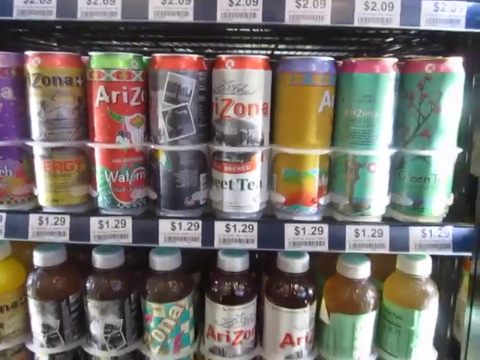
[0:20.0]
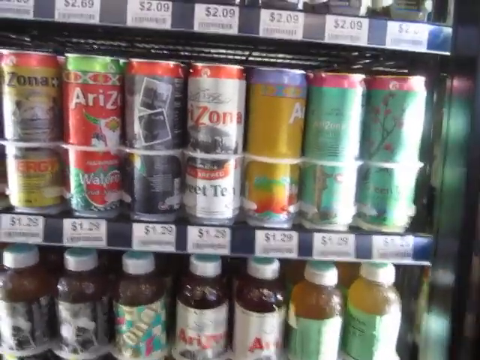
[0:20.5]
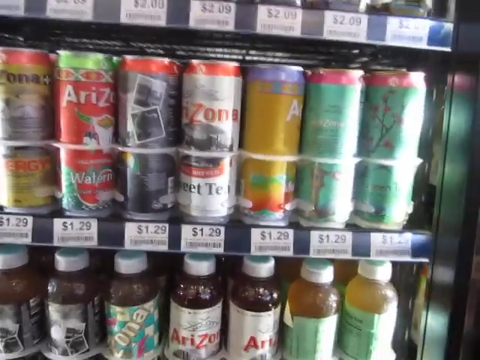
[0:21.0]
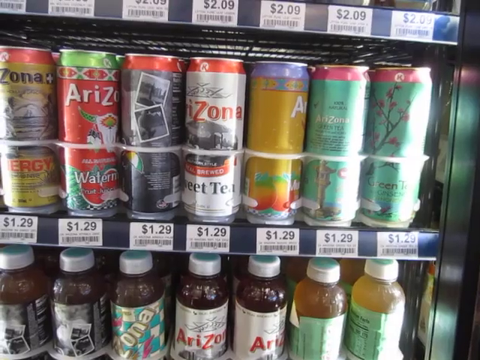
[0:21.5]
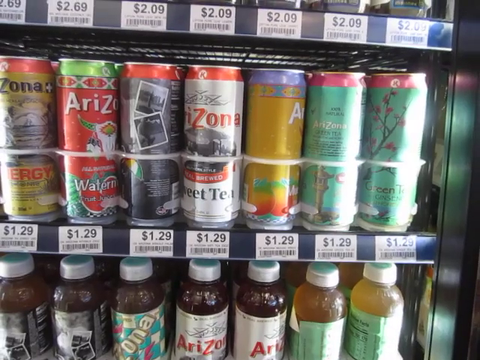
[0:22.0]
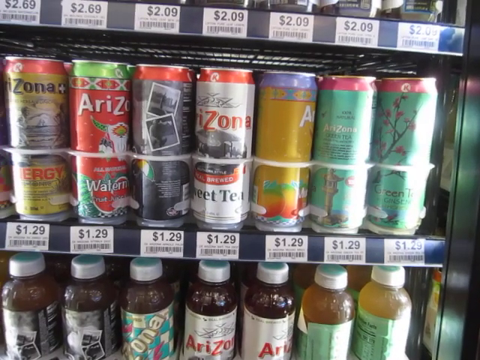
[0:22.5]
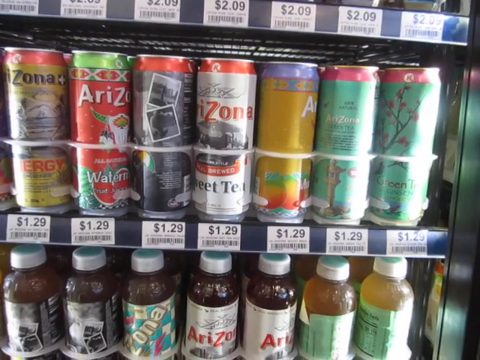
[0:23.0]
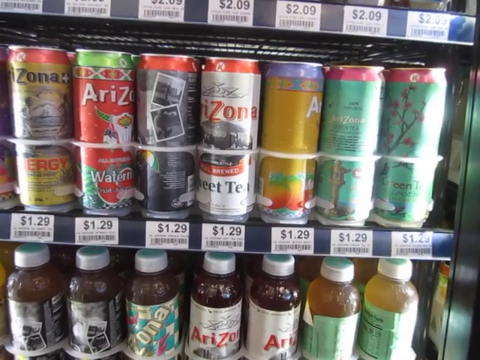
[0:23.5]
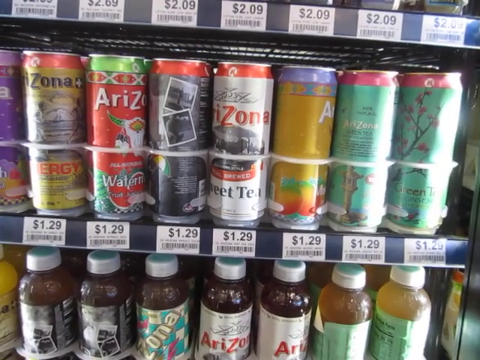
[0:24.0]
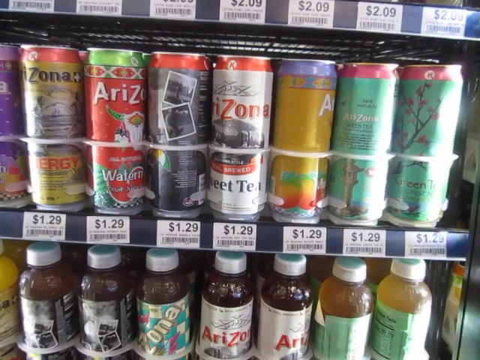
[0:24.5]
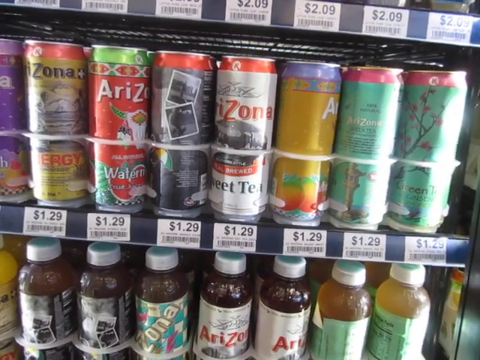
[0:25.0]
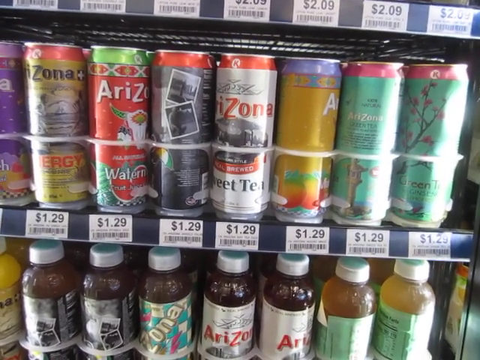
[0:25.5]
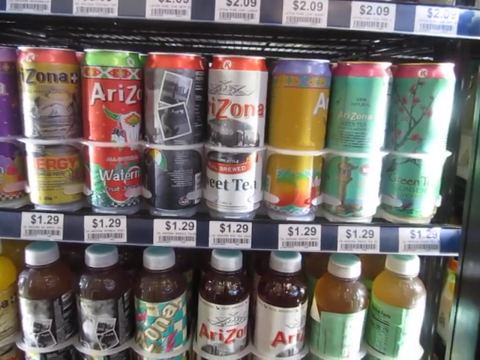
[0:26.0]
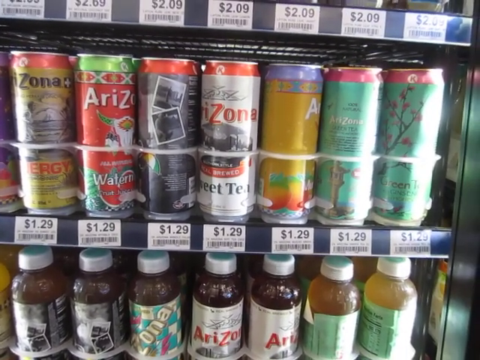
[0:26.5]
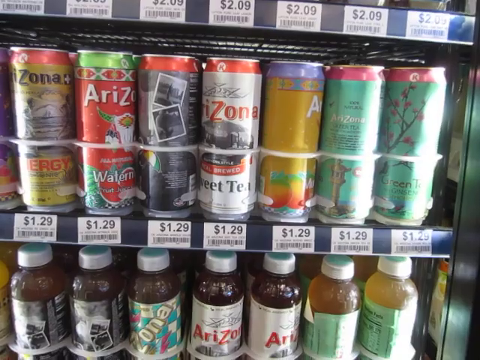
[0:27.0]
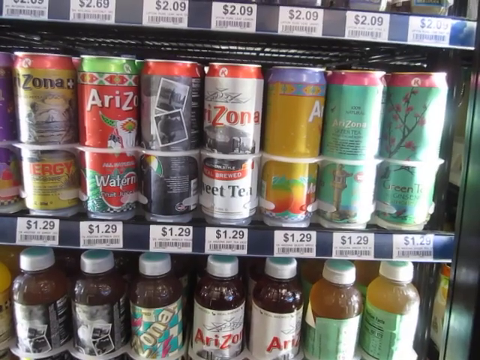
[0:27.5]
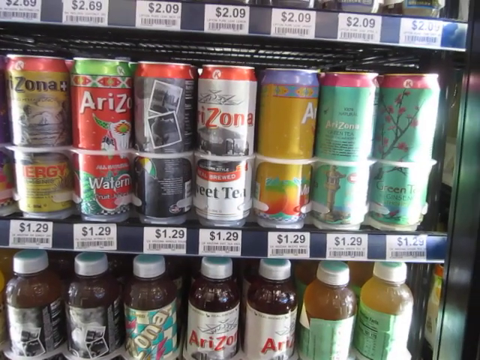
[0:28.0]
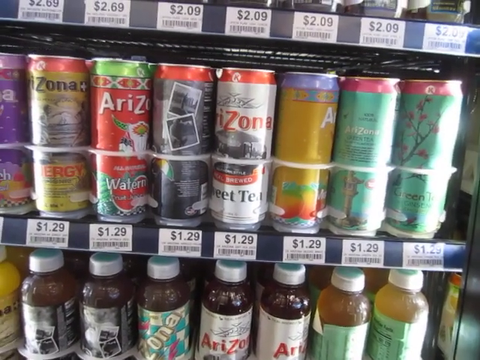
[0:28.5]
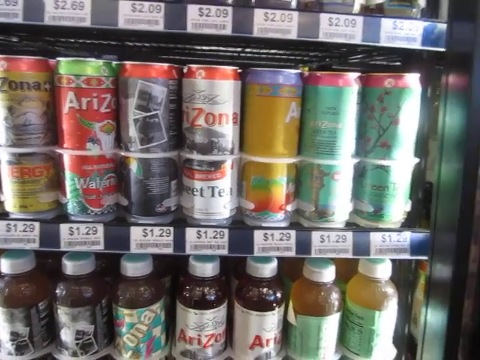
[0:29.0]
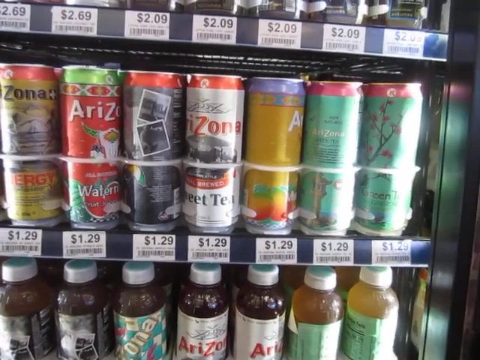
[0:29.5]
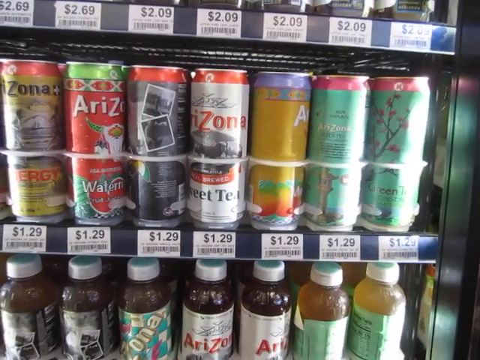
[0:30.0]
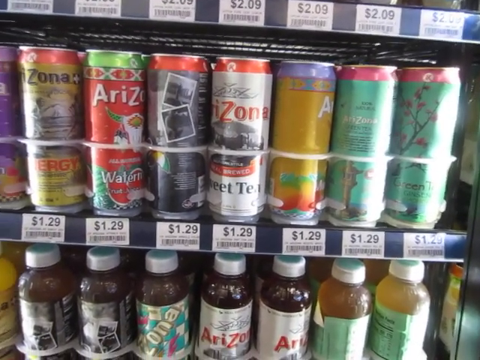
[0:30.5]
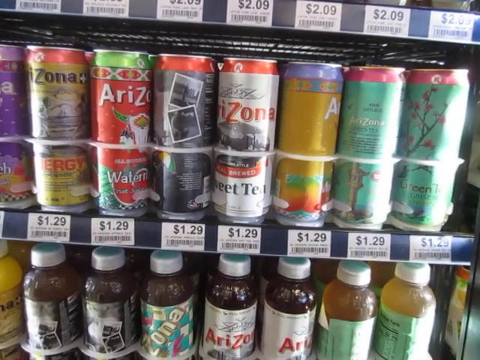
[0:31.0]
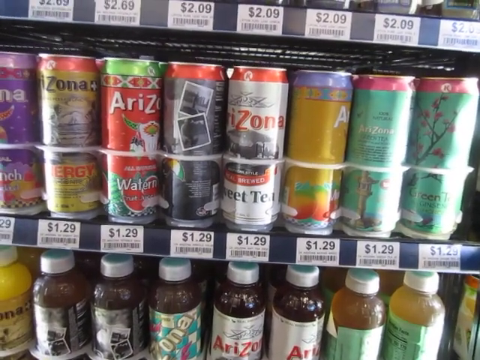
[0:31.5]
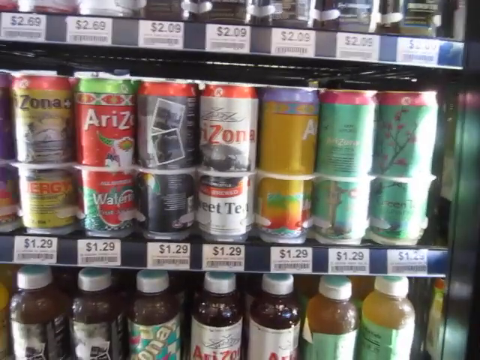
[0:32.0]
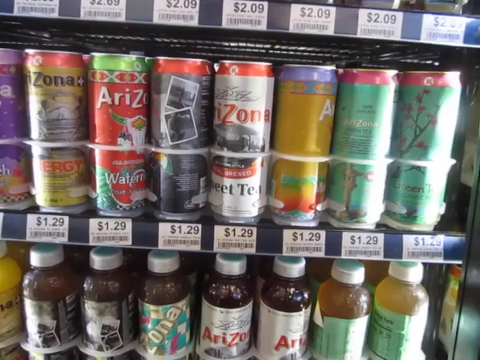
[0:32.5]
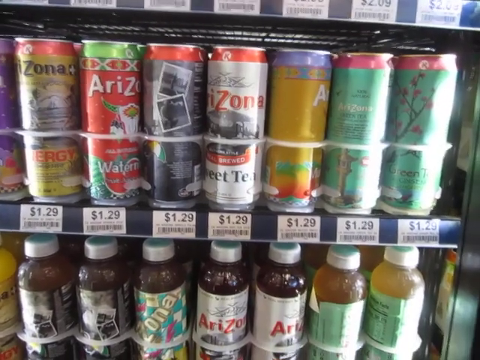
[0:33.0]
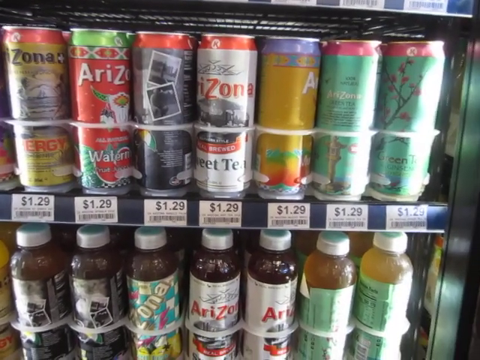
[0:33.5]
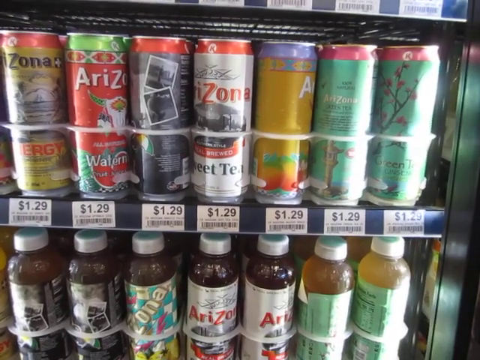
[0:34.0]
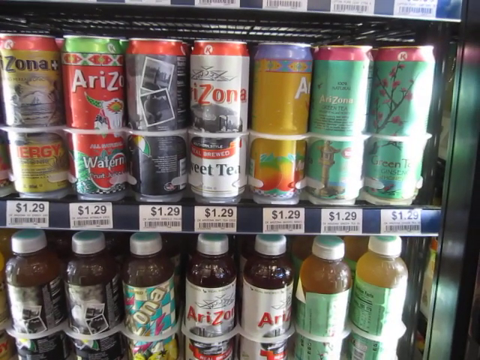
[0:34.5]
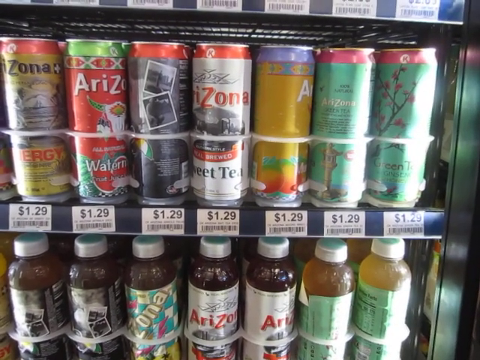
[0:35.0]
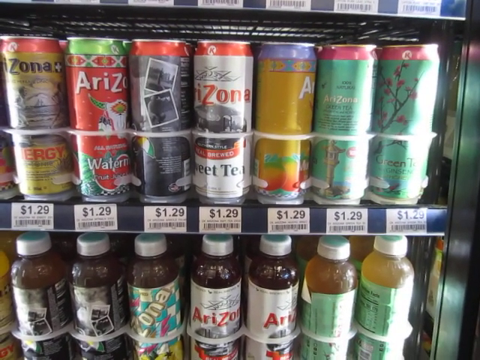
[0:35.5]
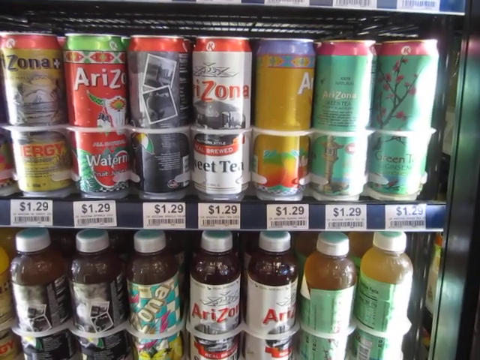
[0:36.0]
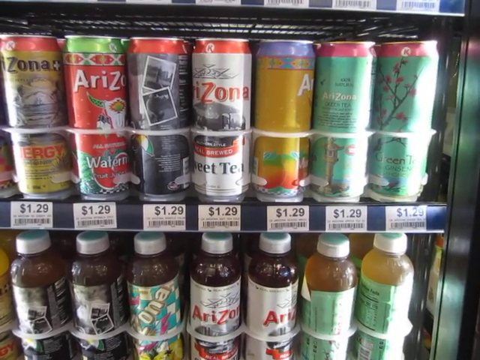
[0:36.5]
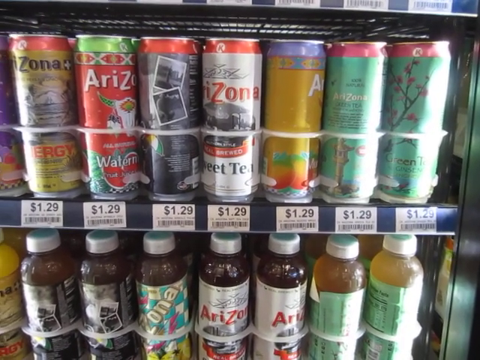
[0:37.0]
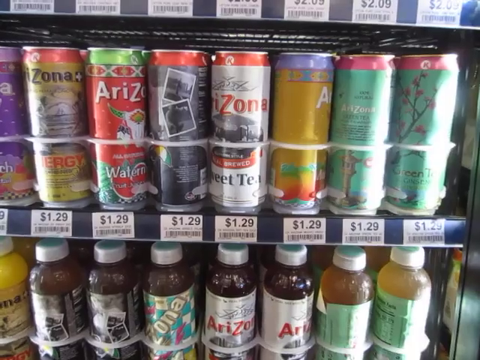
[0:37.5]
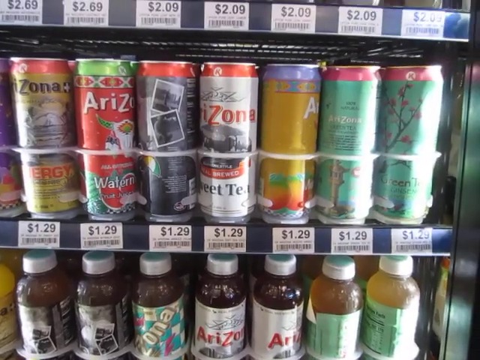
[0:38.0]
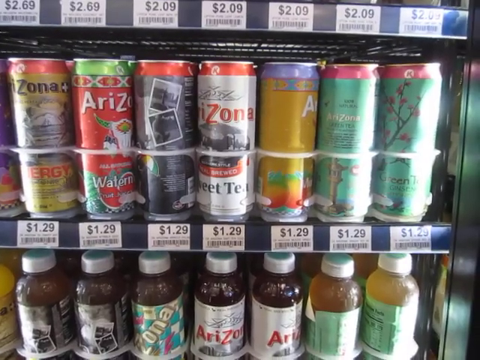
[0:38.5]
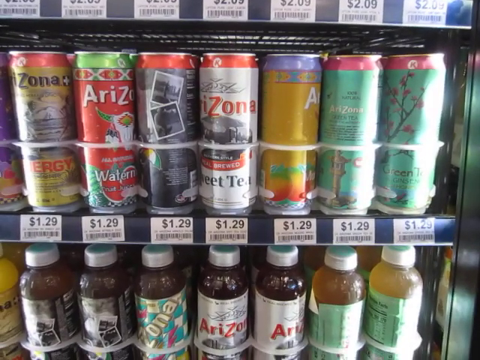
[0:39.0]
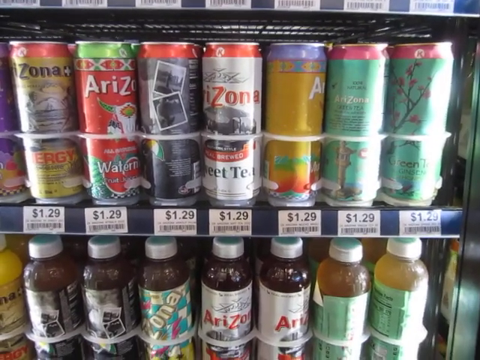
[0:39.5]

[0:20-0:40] He is still looking at the Arizona iced tea cans, which are all $1.25. Above them is another shelf of presumably teas priced at $2.09; their brand and flavors cannot be seen because they are cut off in the frame. The refrigerator has a black aluminum casing. Circle K logos are on the cans, indicating a Circle K store.